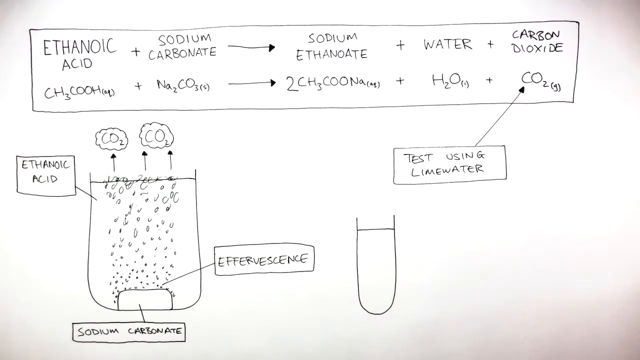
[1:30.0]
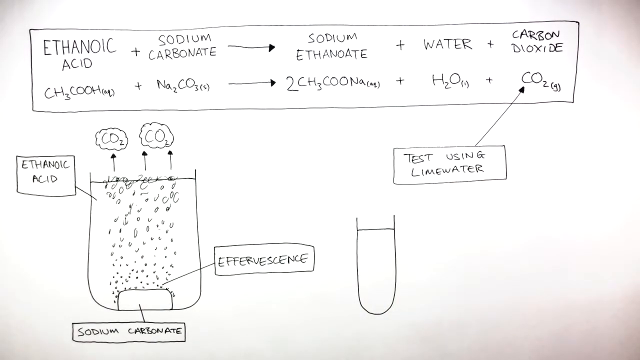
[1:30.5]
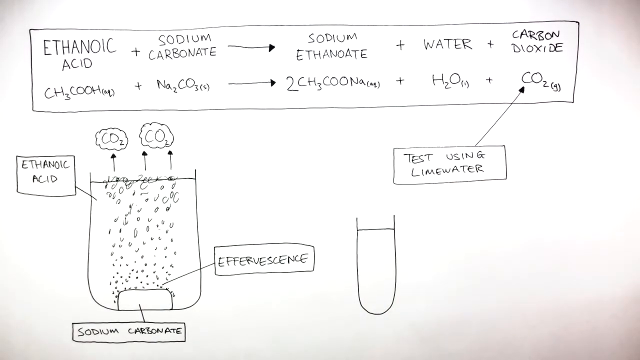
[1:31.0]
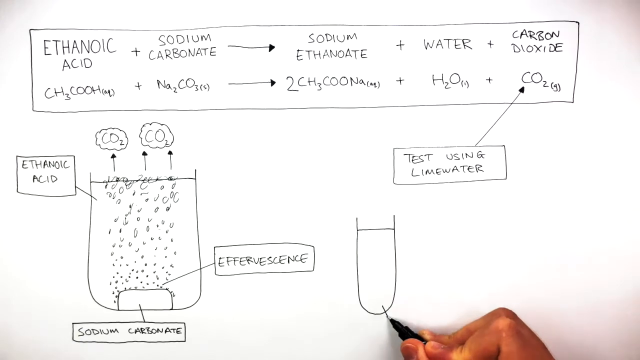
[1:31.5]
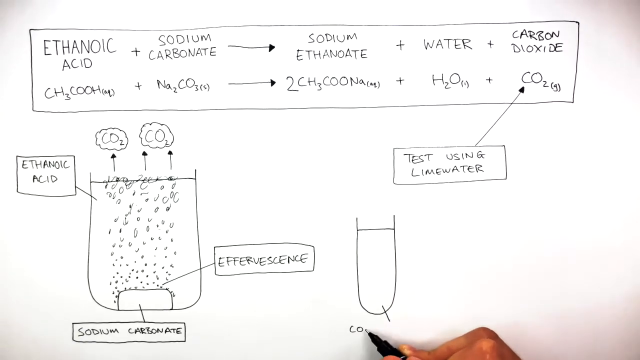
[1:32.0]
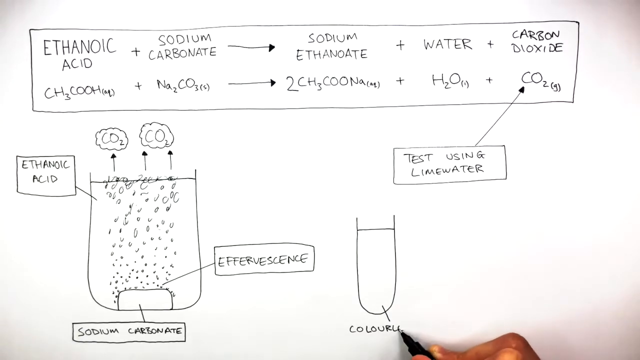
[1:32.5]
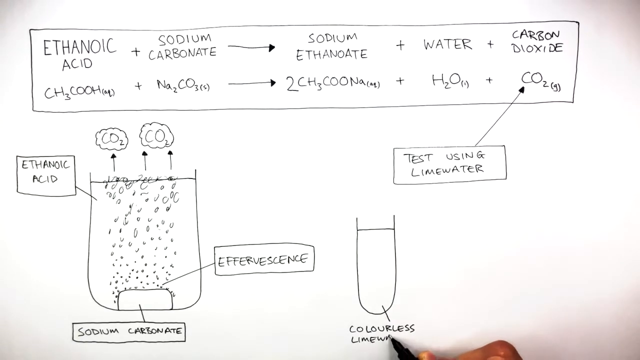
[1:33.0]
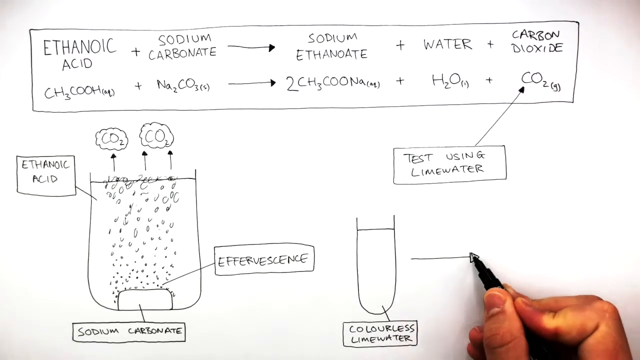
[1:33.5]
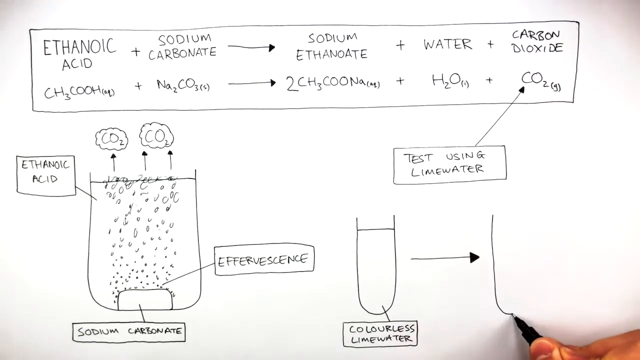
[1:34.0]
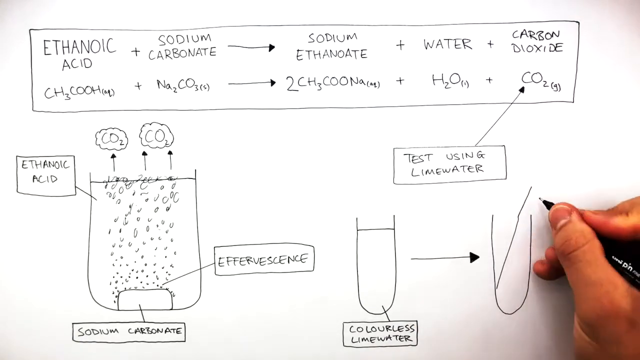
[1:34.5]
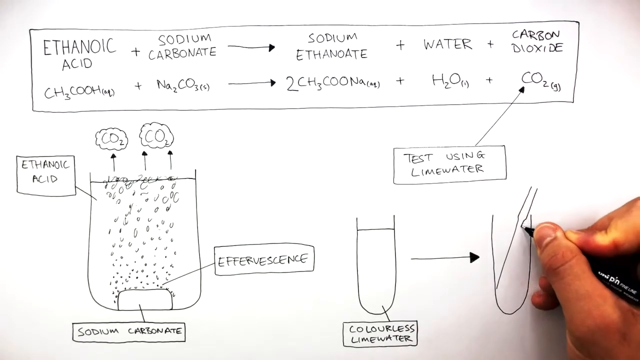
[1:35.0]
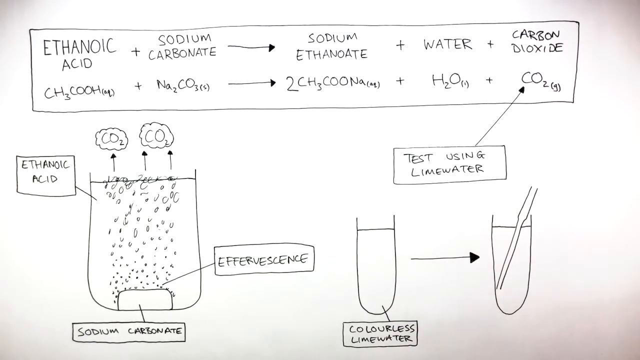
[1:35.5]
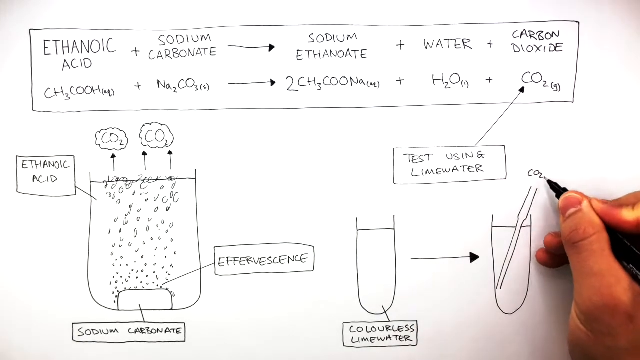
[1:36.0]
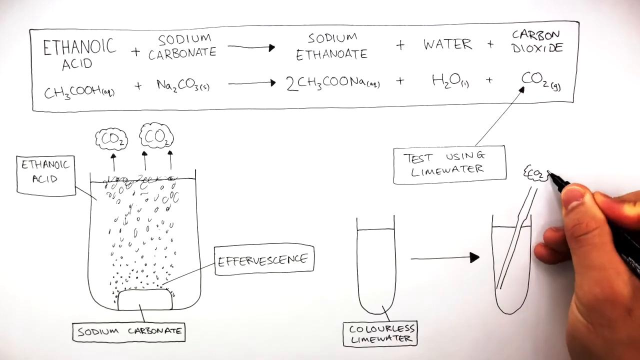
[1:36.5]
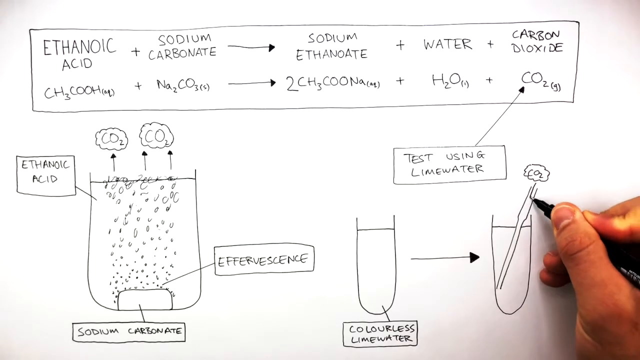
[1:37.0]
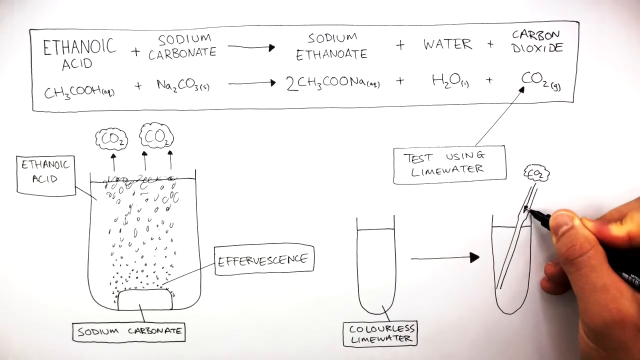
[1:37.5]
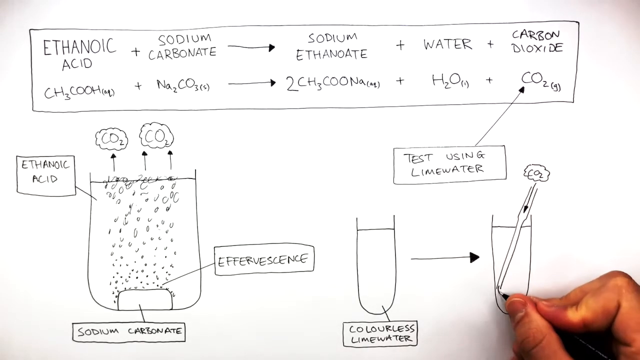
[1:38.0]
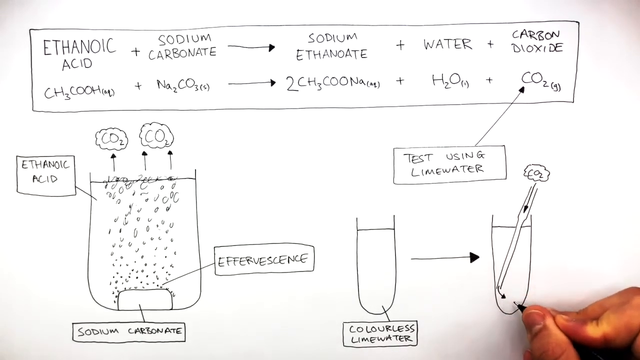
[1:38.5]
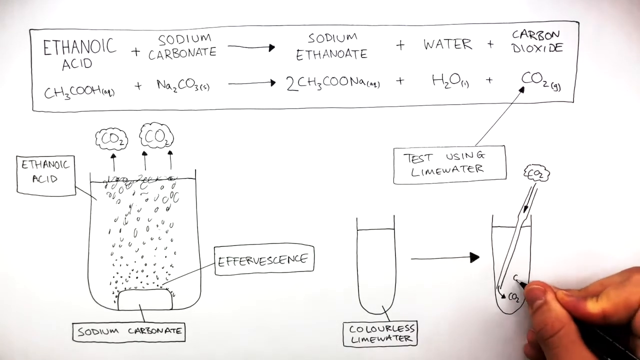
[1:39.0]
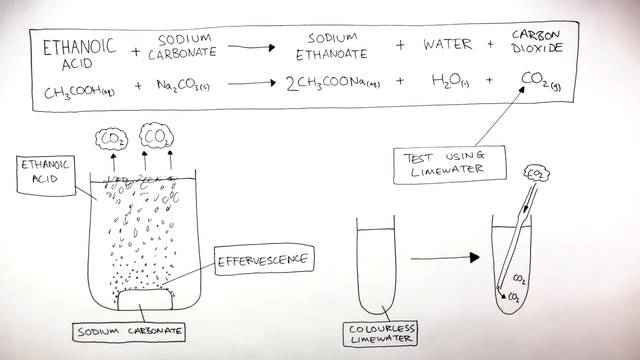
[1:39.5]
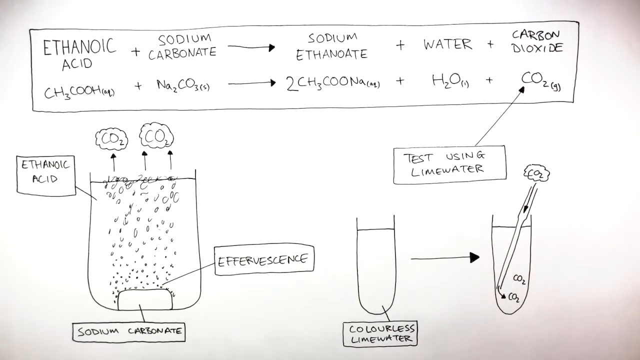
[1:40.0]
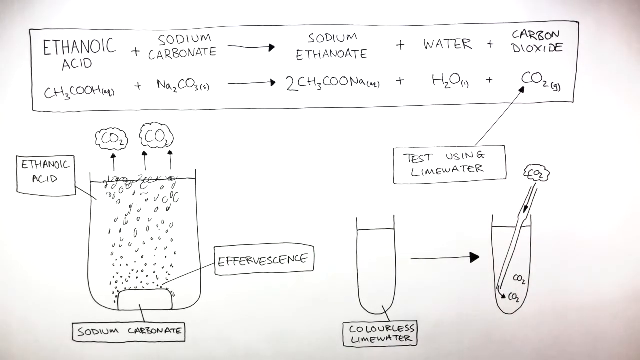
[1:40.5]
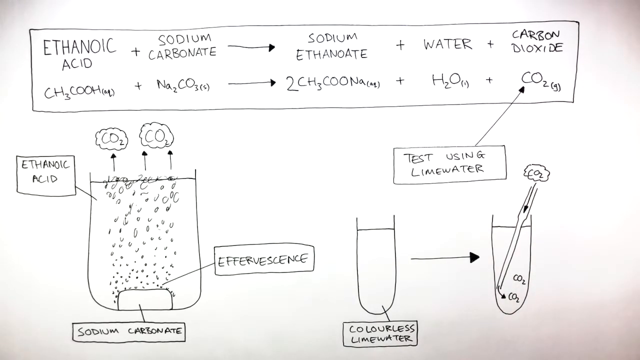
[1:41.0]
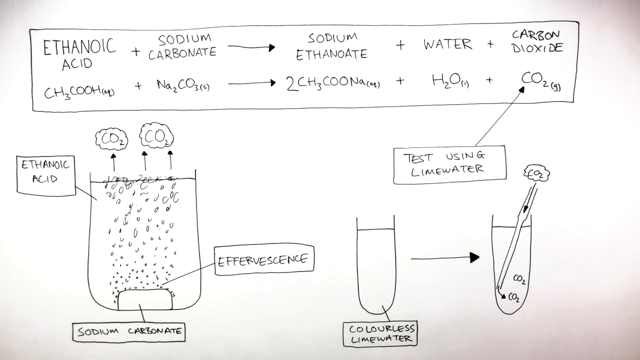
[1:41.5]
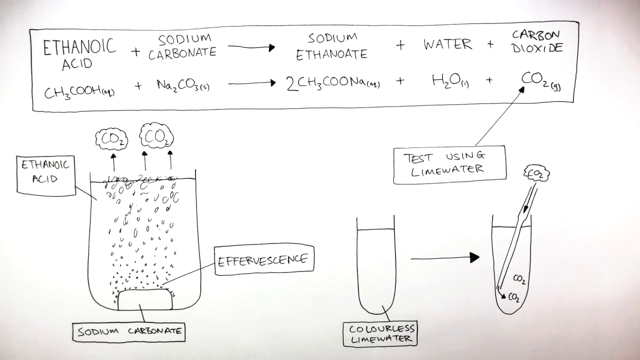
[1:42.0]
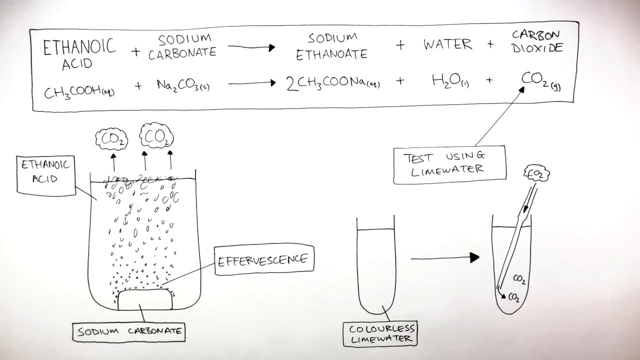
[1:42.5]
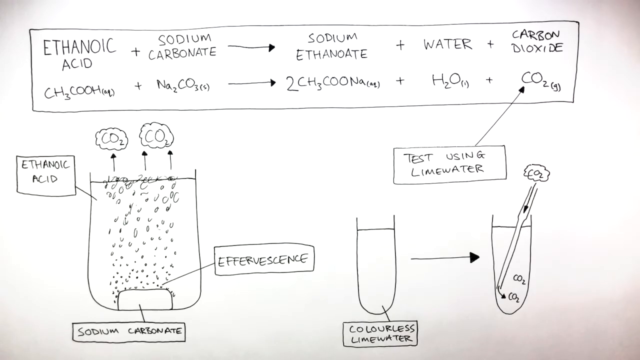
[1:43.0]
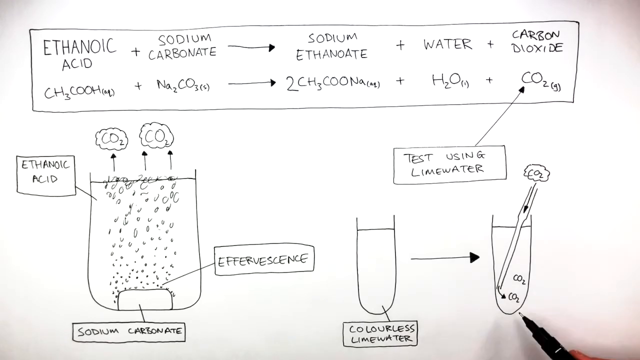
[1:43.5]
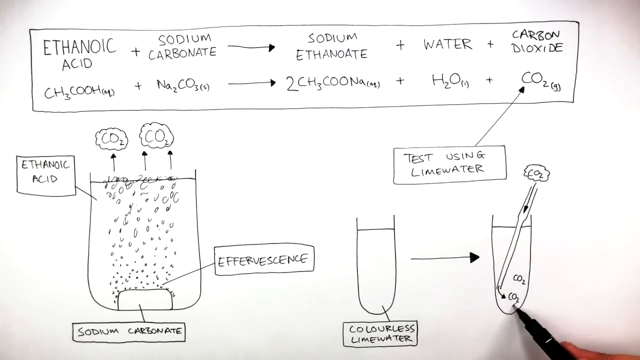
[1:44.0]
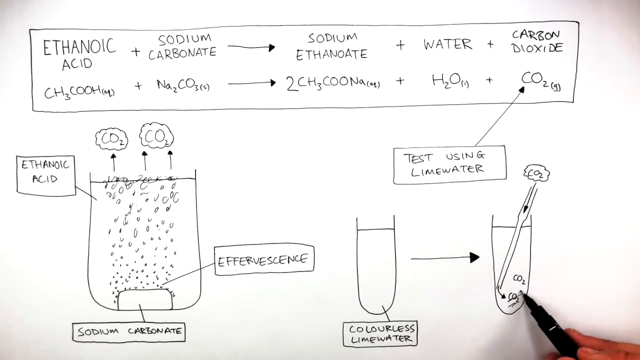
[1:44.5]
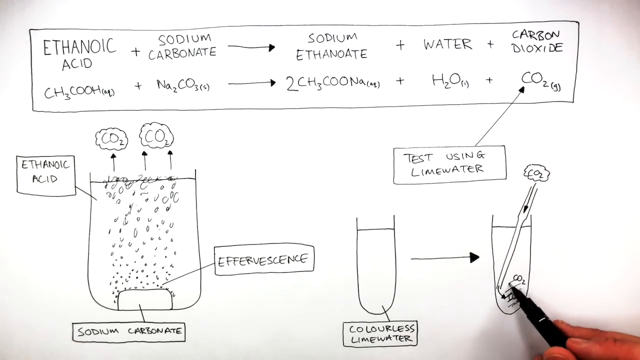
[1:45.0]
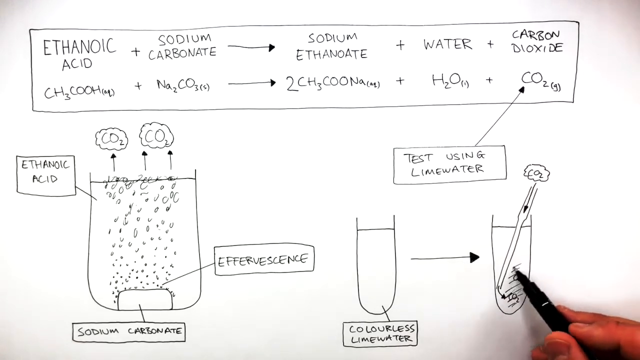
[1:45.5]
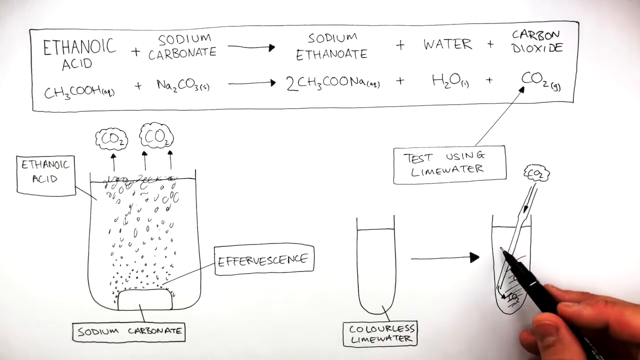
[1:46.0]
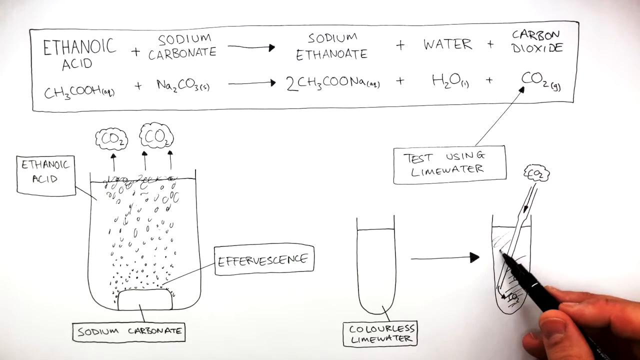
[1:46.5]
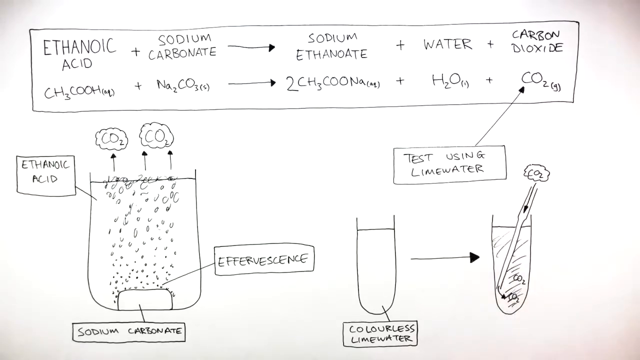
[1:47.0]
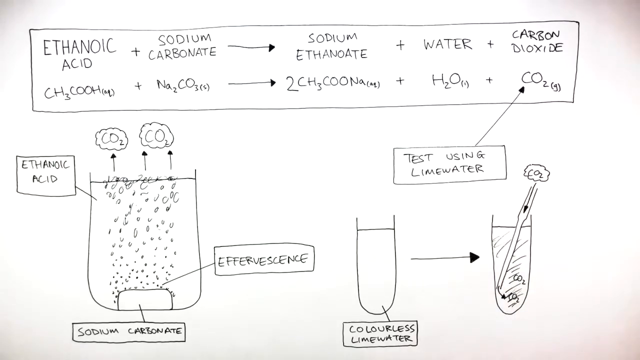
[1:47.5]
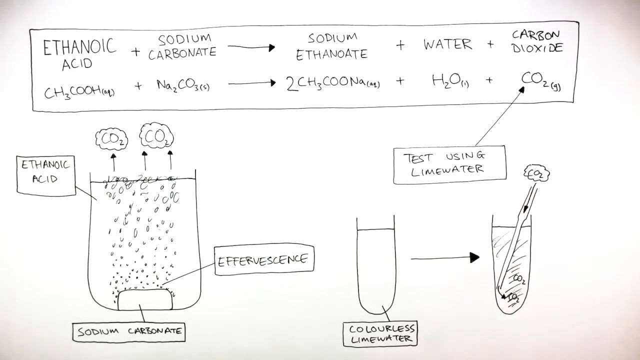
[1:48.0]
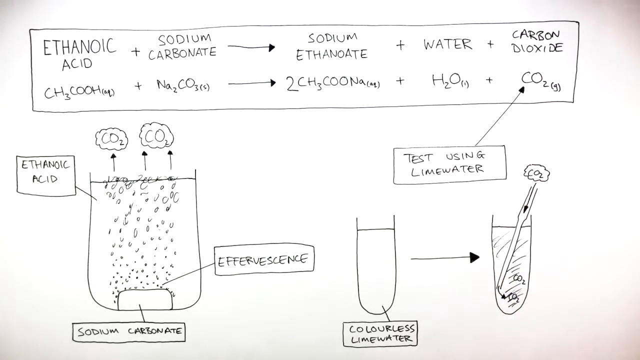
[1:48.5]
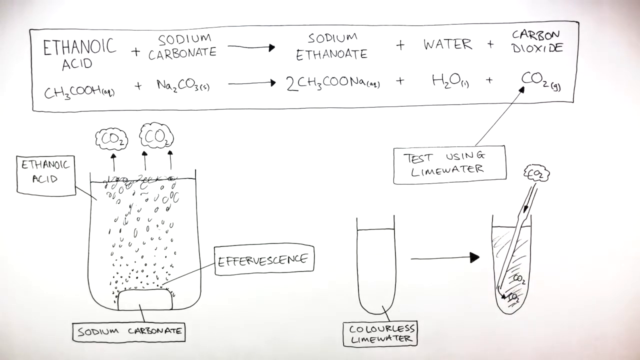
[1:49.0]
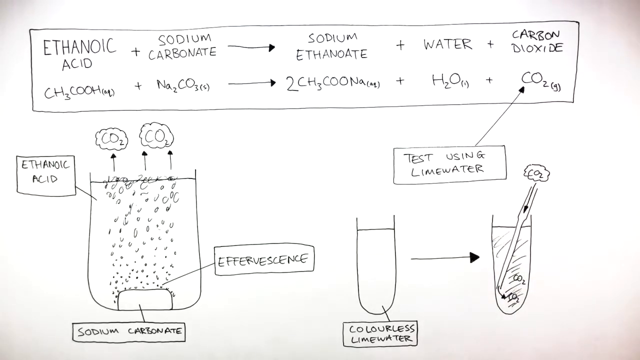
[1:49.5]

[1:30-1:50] The presenter, drawing in felt-tip pen, labels the first test tube "colourless lime water". He then draws an arrow and begins drawing a stick going into a test tube, which supposedly releases CO2 on contact with the colourless lime water; this is labeled the test using lime water. The reaction is shown to change the colour of the colourless lime water, which the presenter indicates by shading the liquid region of the test tube. The other items remain visible on screen: the chemical reactions enclosed in a rectangular box and the drawing of the reaction between ethanoic acid and sodium carbonate in a large beaker. All labels on the drawings are enclosed in a rectangular box. The entire scene is in black and white; the person does not write with a coloured felt-tip pen.